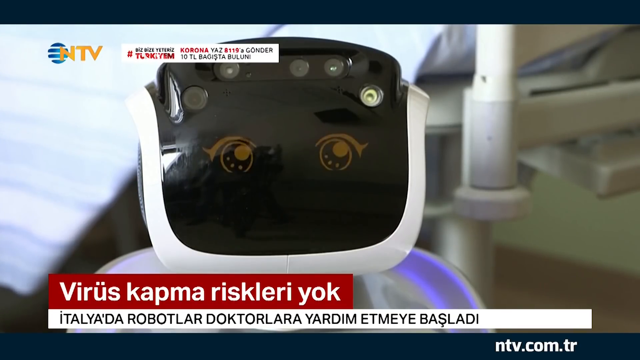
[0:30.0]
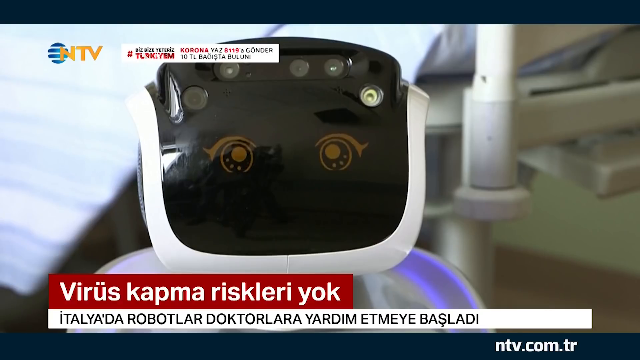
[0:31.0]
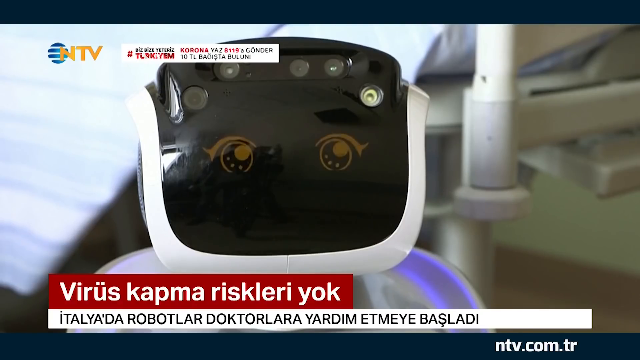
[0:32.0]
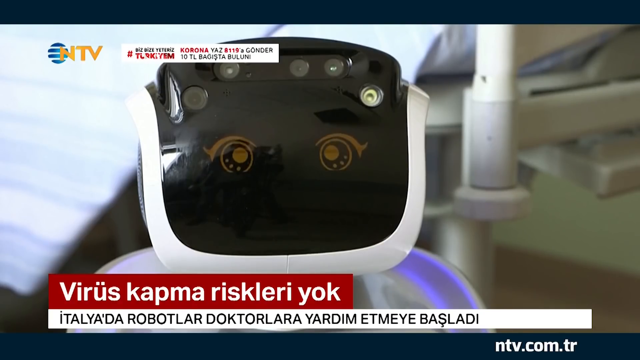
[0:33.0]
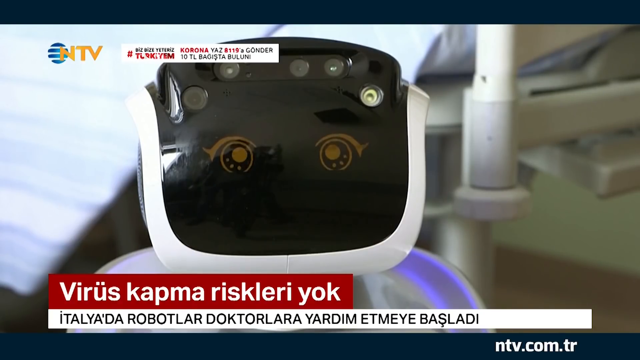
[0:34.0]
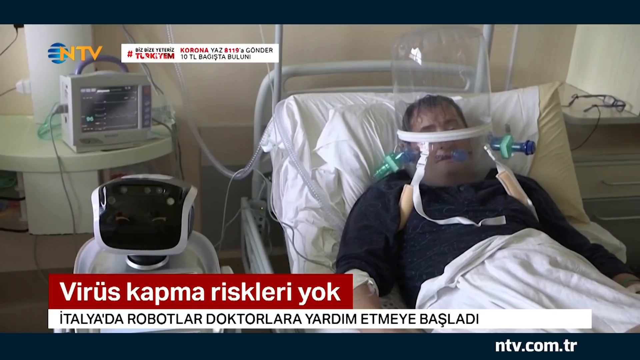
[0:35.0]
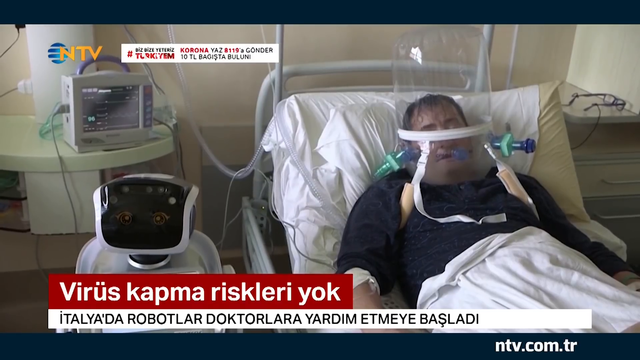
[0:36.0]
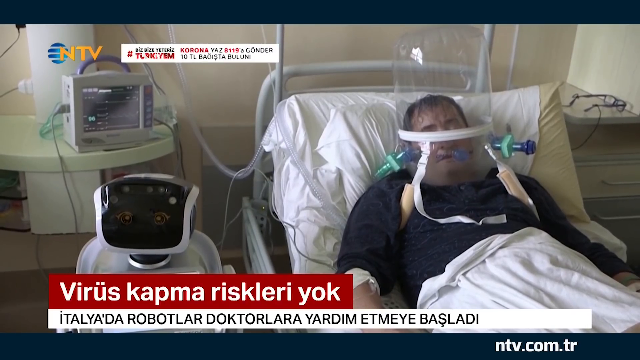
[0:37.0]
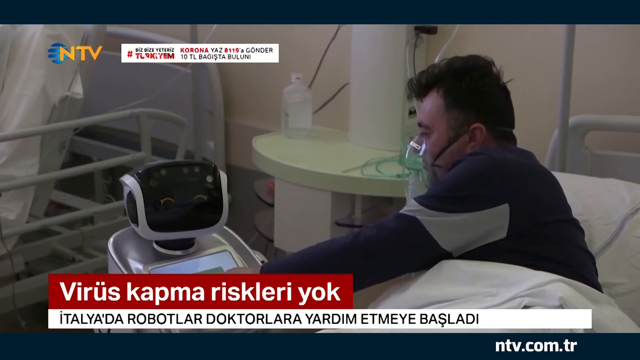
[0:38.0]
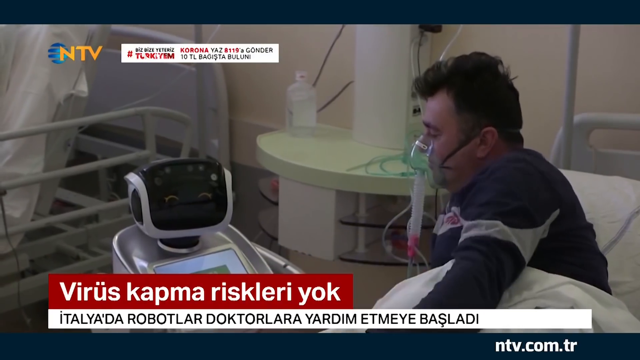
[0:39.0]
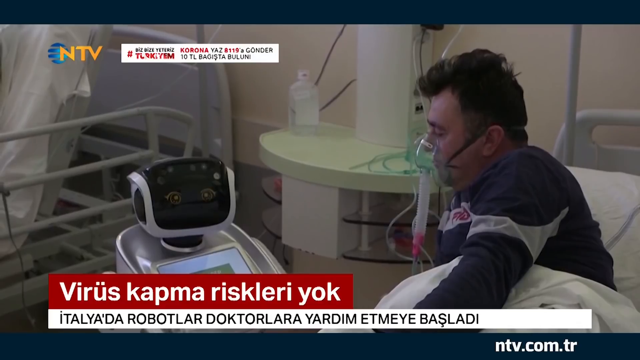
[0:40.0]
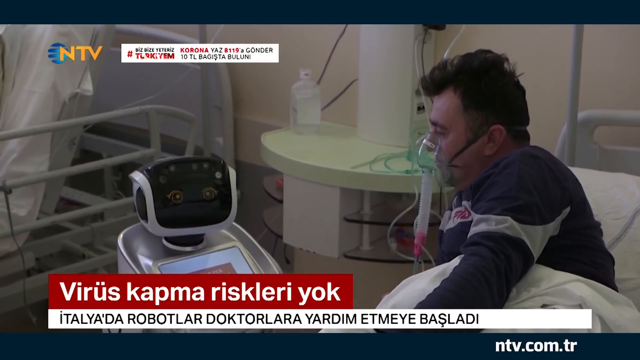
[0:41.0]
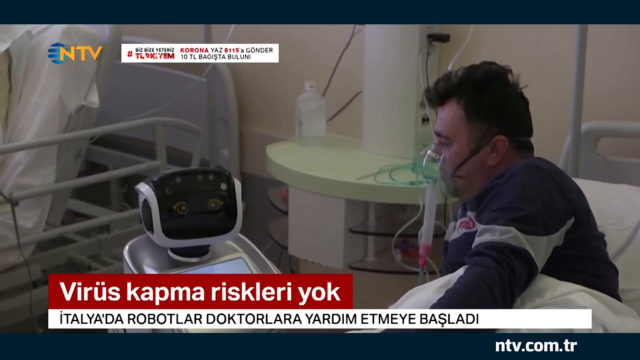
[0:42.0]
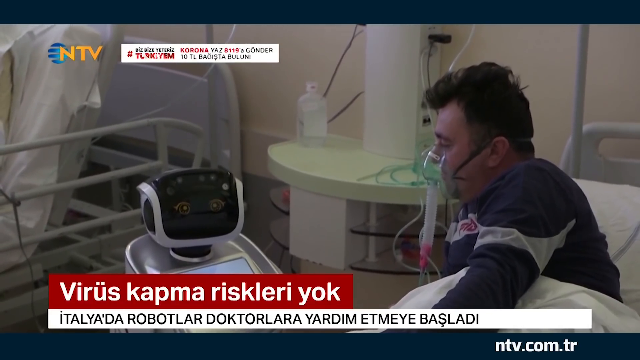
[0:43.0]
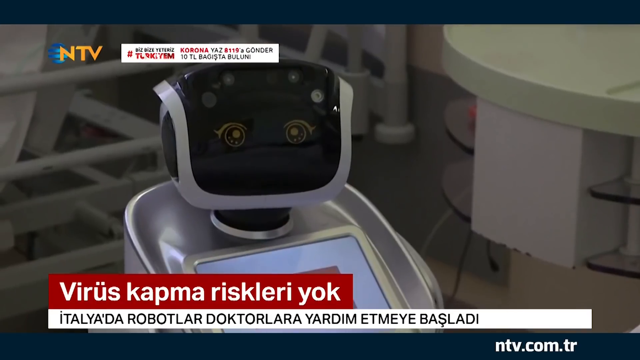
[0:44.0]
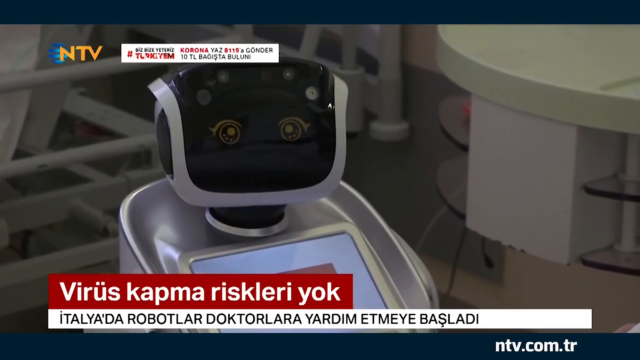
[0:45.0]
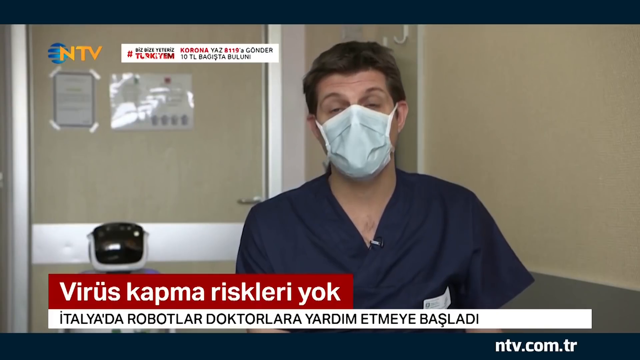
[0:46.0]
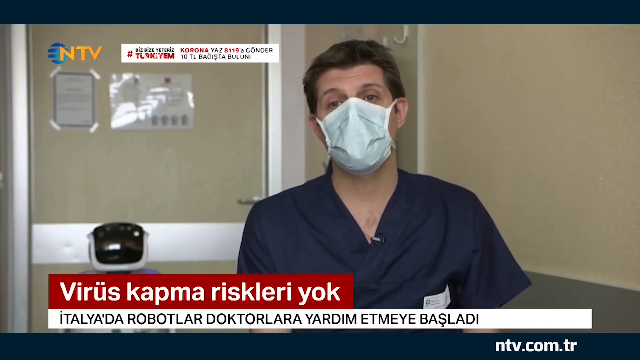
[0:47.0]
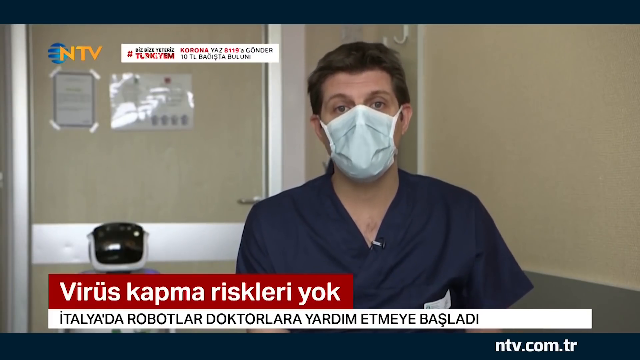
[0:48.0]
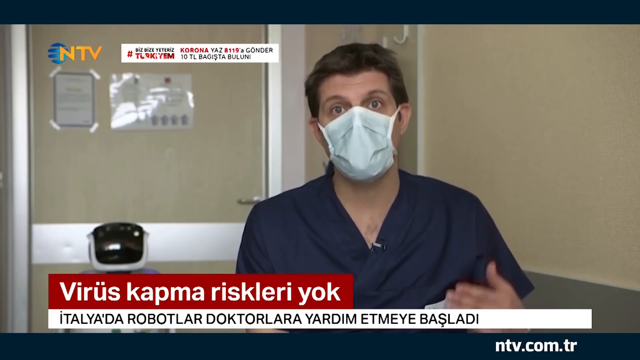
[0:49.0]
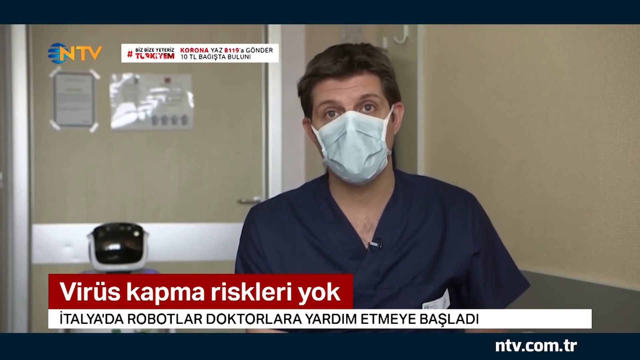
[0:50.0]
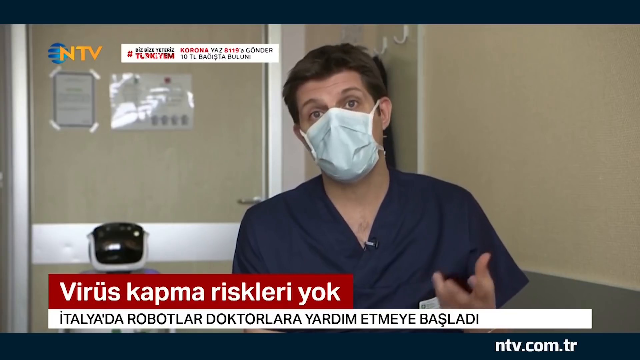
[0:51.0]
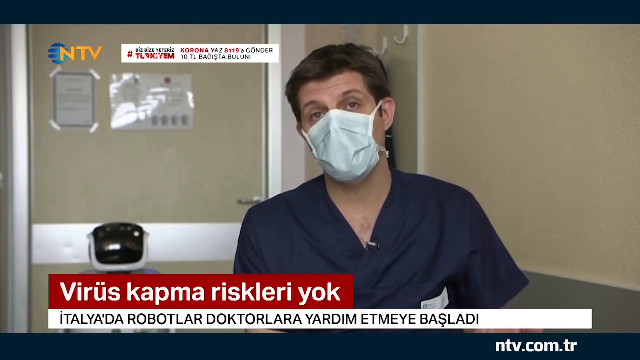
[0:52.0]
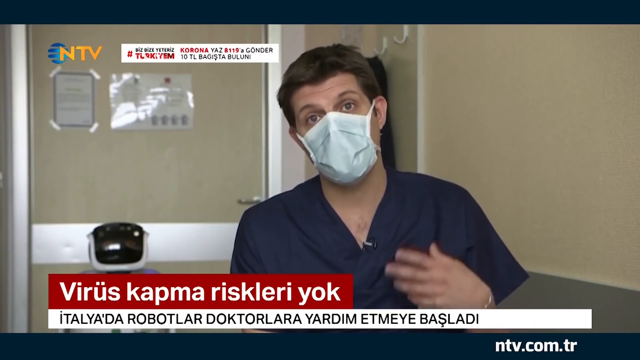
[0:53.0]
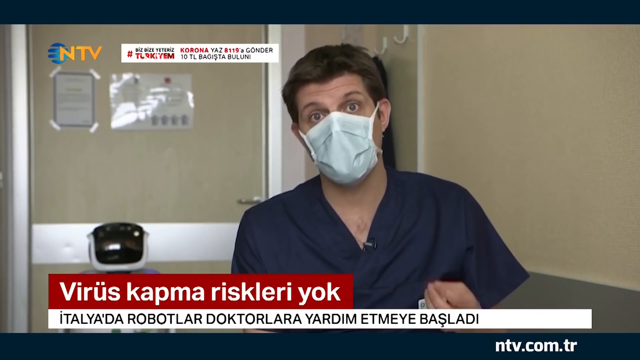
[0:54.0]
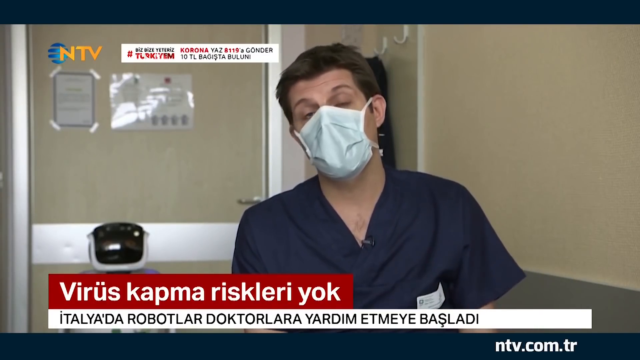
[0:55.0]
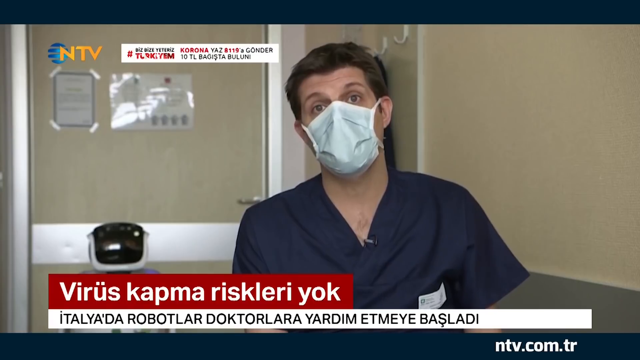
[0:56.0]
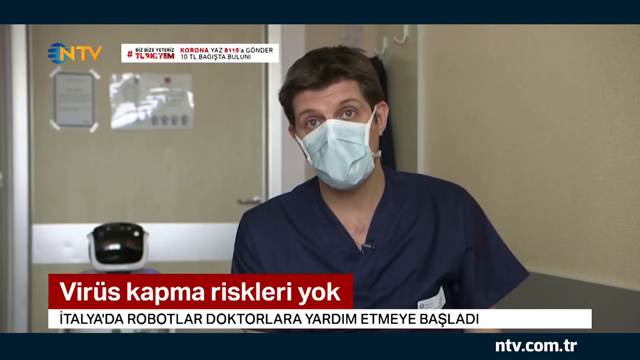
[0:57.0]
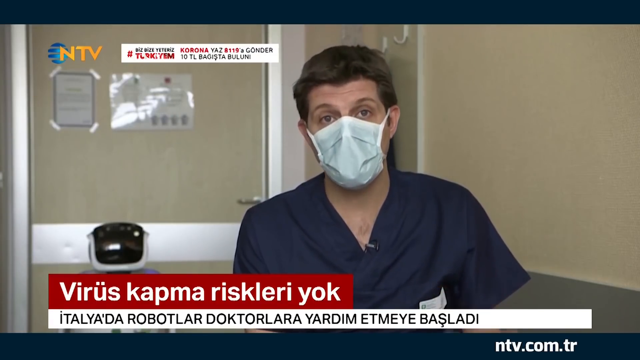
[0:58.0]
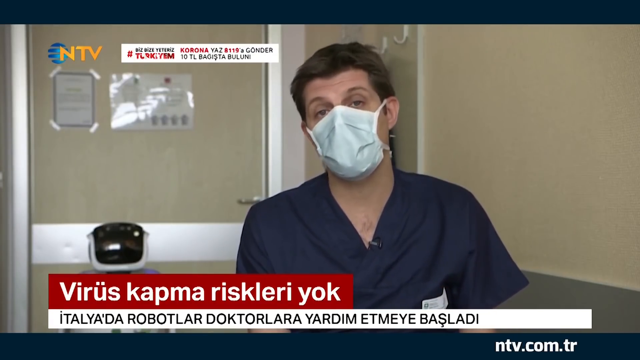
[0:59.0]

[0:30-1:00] A white robot appears to be walking with a man wearing a white suit, and they seem to be walking up and down in a hospital. At the top left is the word "NTV", the name of the channel broadcasting the story. They pass a hospital room. In one of the rooms, a man lies in a bed, appearing to be in very critical condition. He is on life support and appears to have some kind of mask over his face that helps him breathe. What the robot is supposed to do is unclear; it is probably designed to occupy patients lying in hospital beds and in the emergency unit.